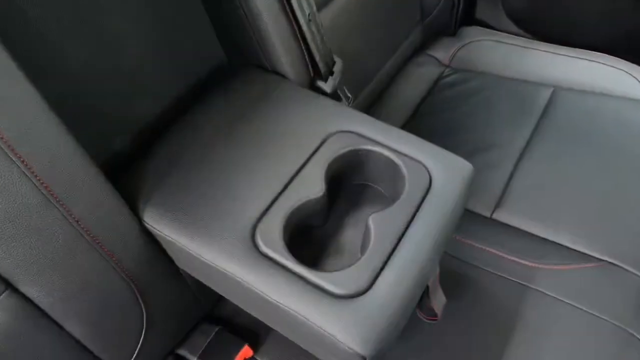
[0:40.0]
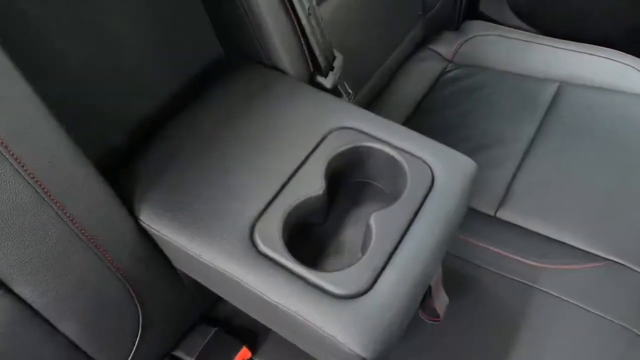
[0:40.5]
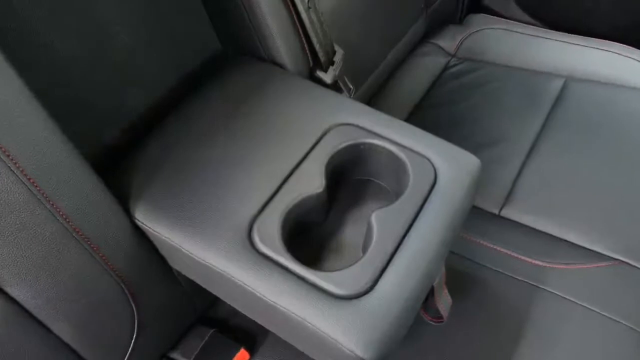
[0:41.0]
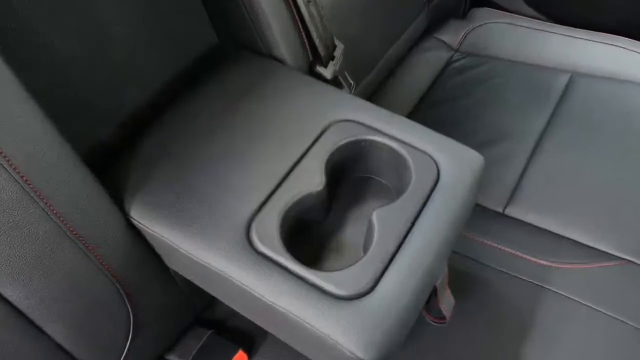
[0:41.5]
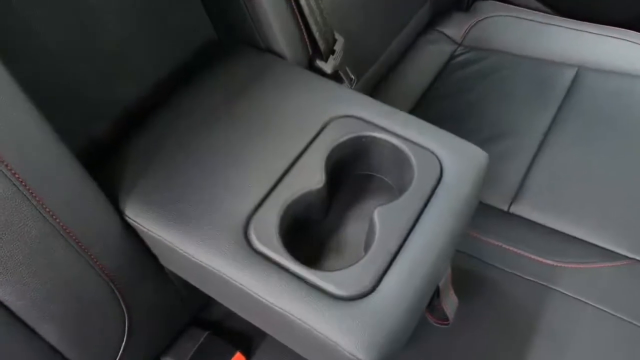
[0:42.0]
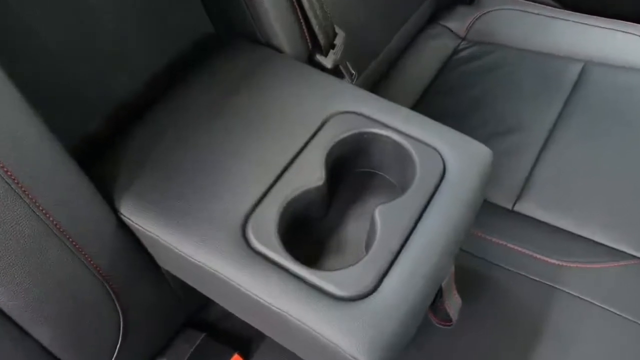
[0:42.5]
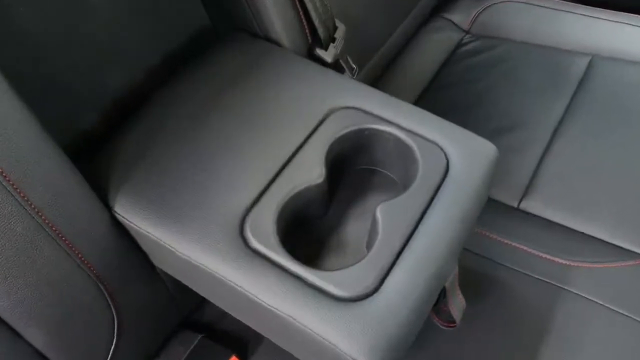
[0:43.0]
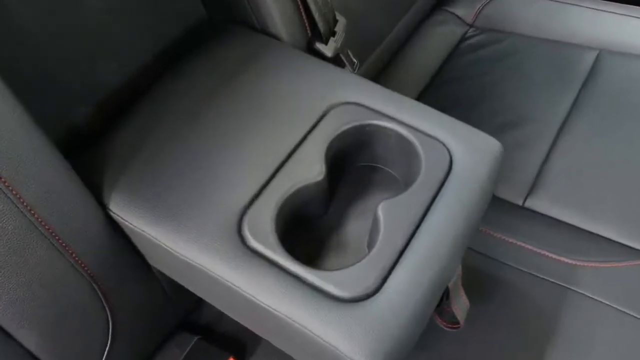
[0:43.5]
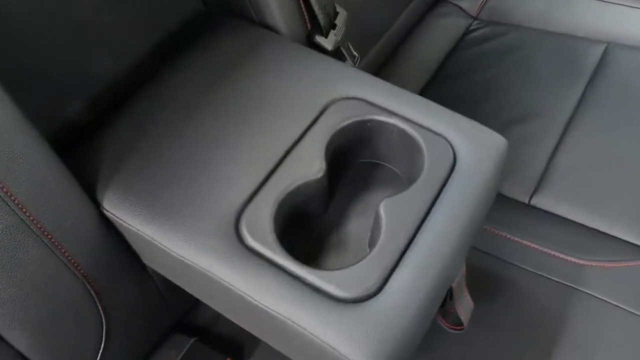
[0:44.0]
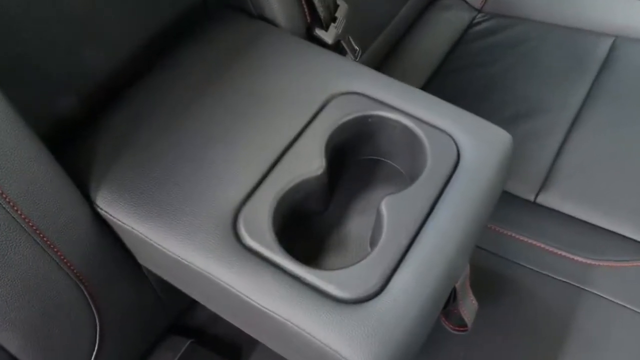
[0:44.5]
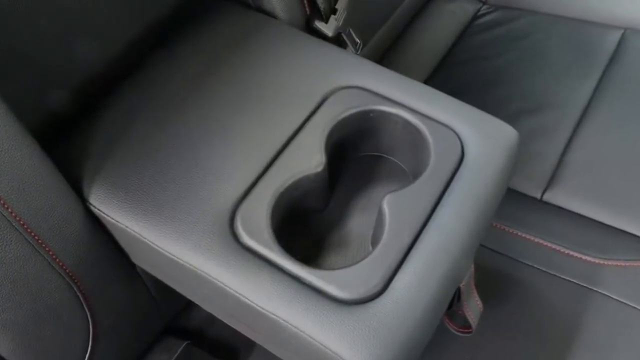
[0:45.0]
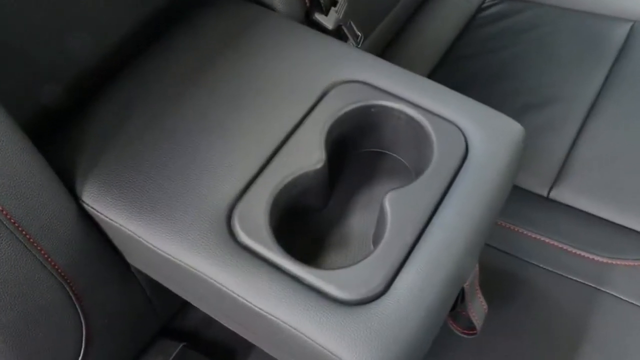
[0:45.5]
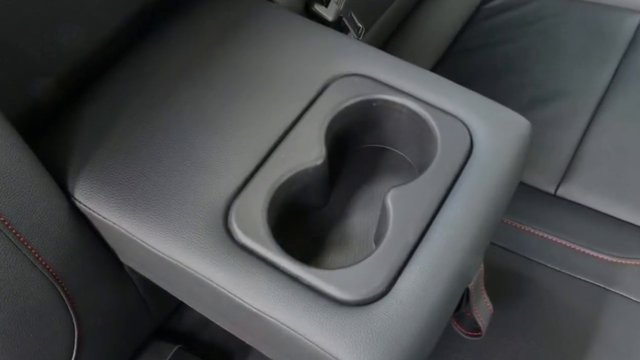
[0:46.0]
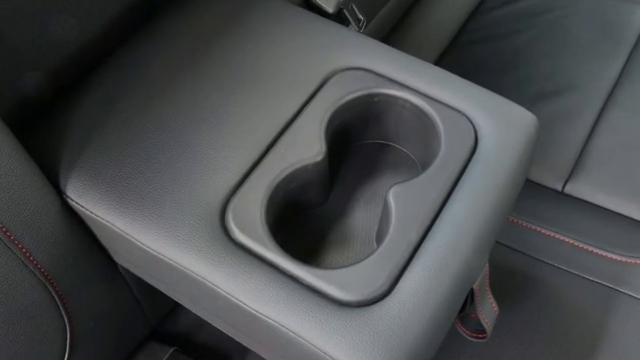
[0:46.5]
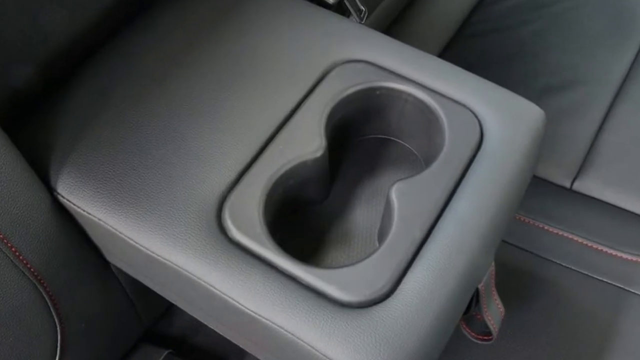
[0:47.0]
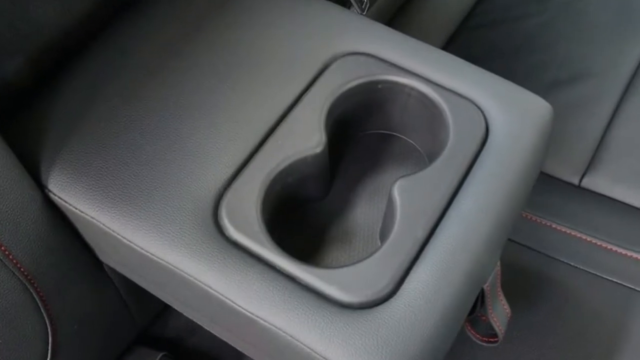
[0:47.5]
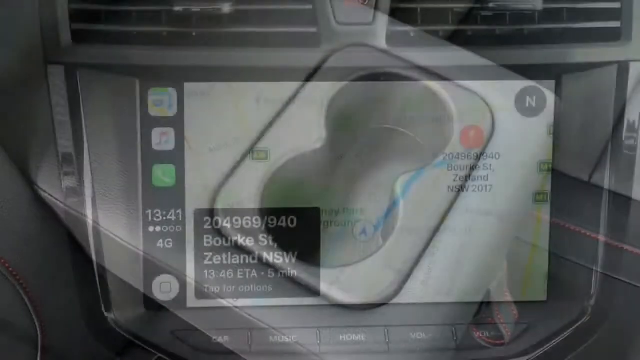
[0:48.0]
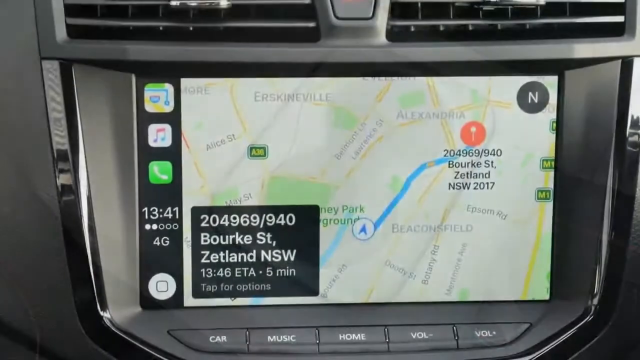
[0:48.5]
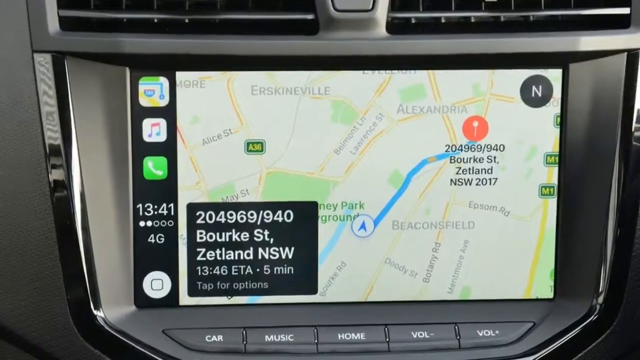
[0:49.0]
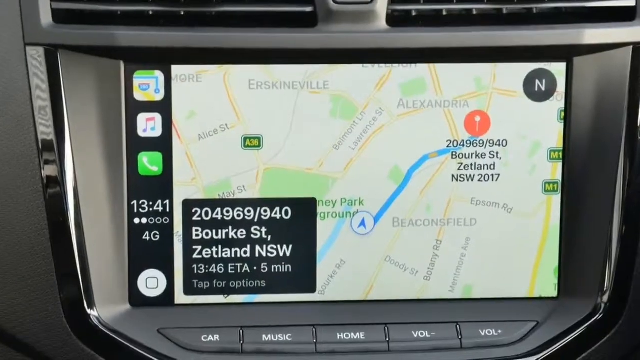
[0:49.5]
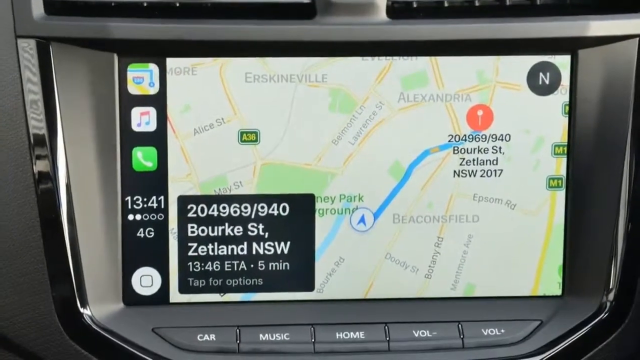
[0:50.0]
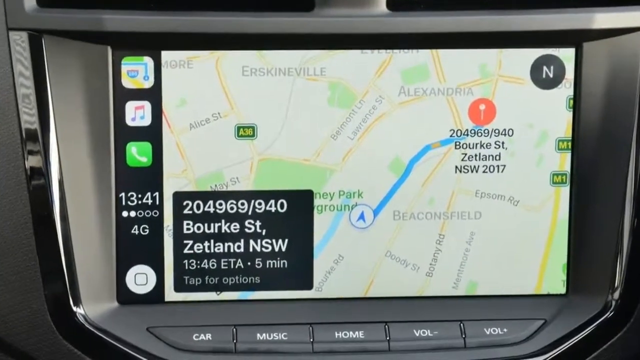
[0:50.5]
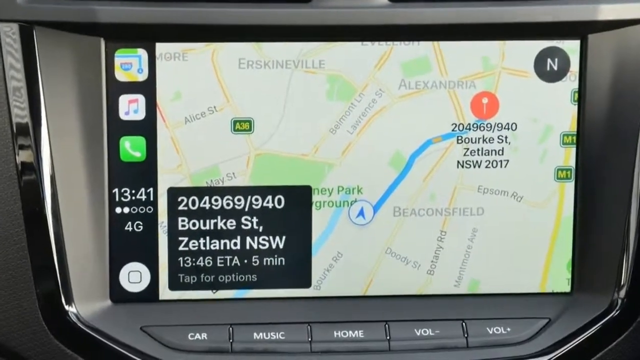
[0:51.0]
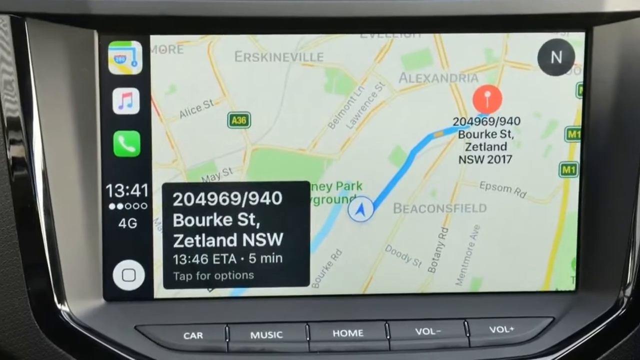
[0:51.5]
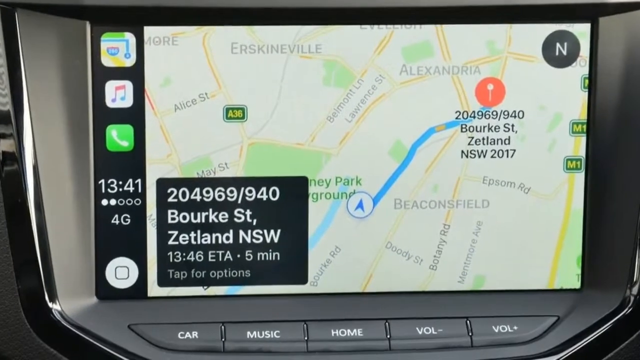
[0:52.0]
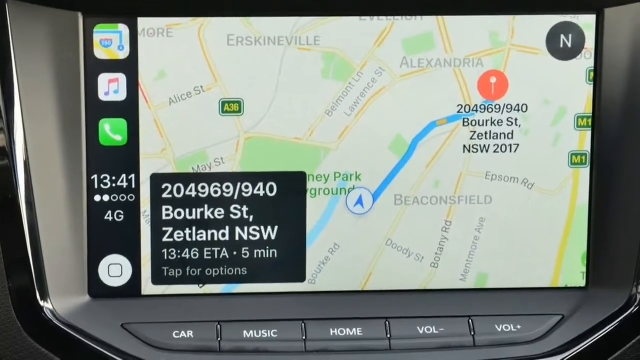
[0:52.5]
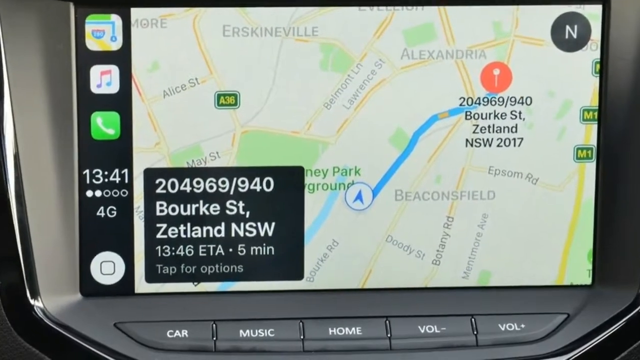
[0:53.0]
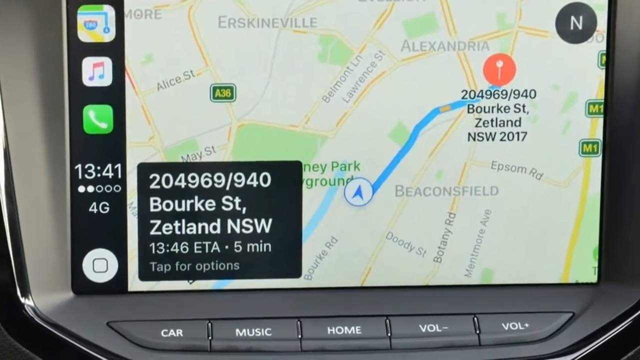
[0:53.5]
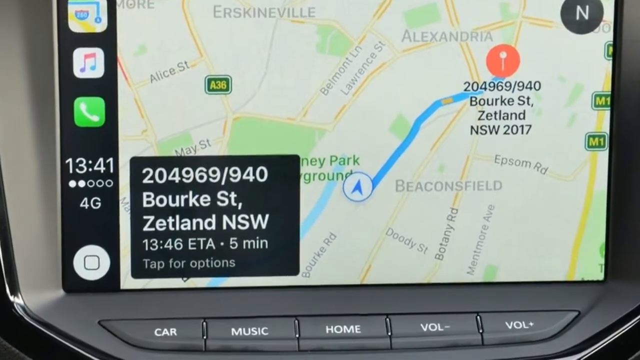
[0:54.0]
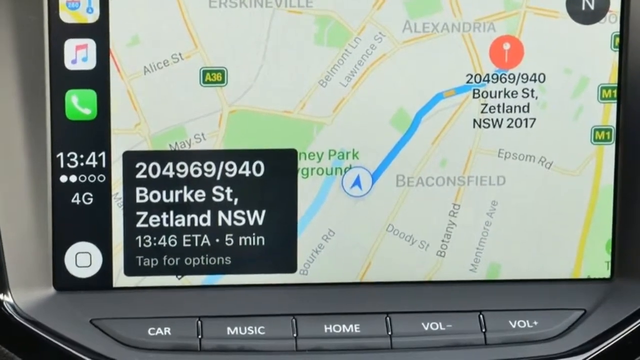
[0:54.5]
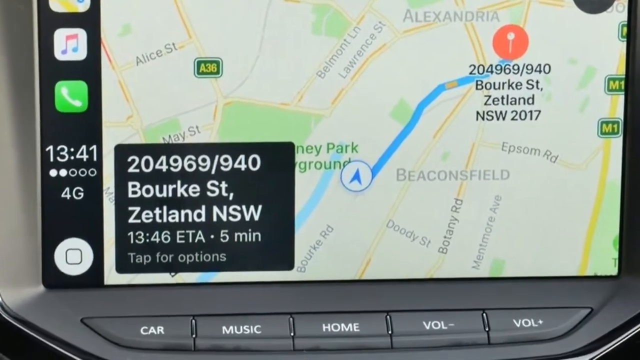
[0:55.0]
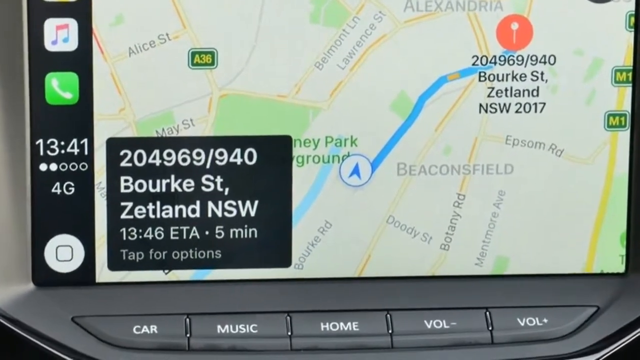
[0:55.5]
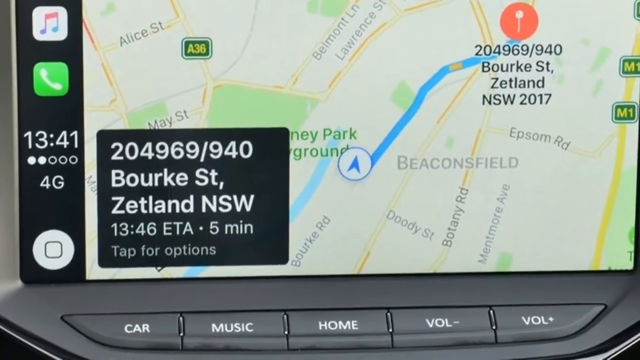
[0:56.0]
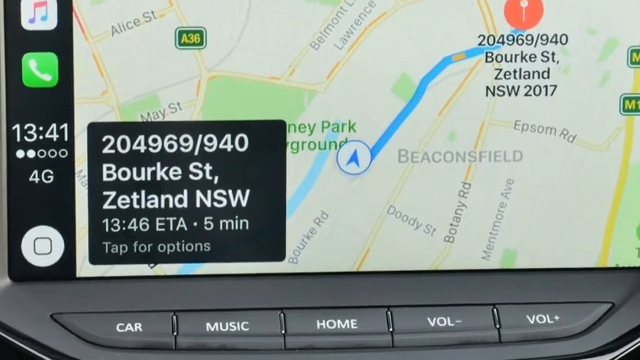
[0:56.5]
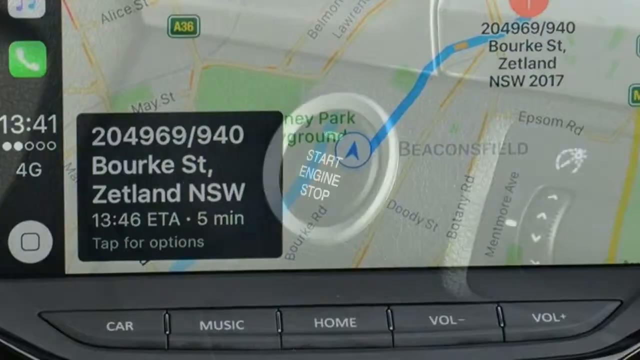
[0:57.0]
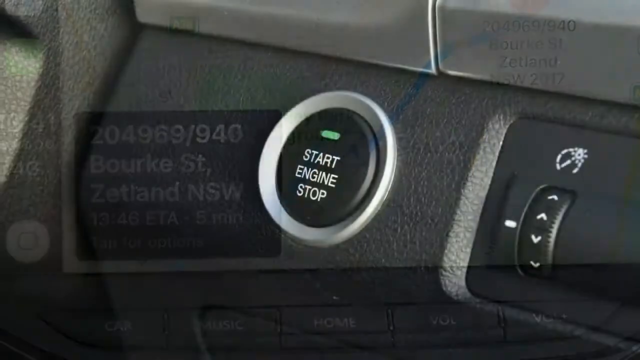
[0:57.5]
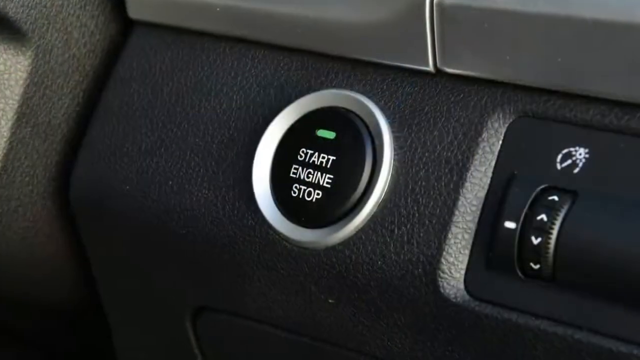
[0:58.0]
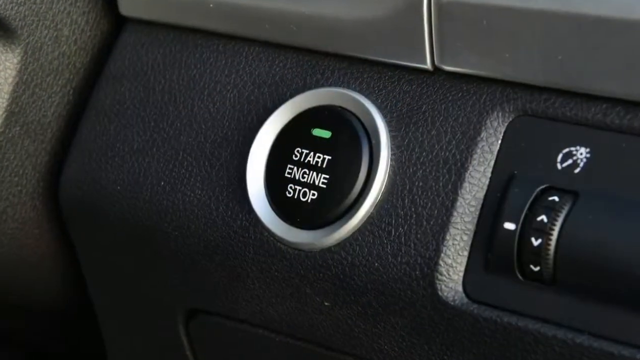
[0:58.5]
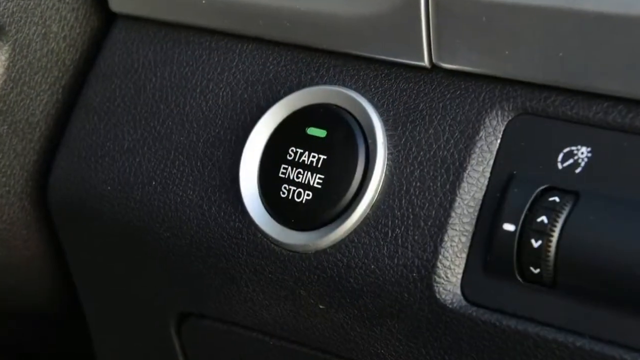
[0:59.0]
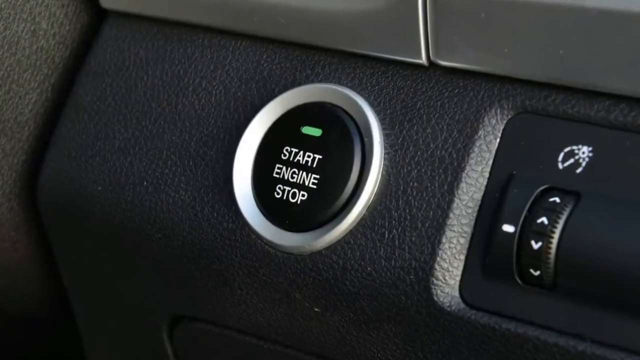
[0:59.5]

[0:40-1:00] The backseat of a car is shown, with a cup holder that has two holes for cups side by side, but no actual cups in them. It is folded down, and it looks like it could be folded up and put out of the way. The camera zooms in on the cup holder. Next, a GPS monitor inside the car shows a map on the screen with the time at 1341. A large number reads "204969 / 940 Bork Street Zetland NSW," and the screen says "1346 ETA" and "five minutes." It also says "tap for options." The camera then zooms in on the start engine button, a black button surrounded by gray chrome with a green lit-up area, which says "start engine stop."